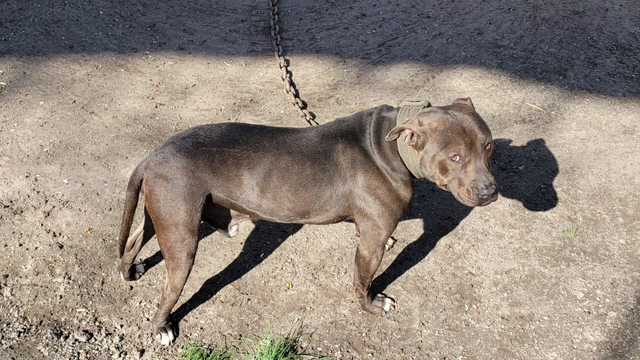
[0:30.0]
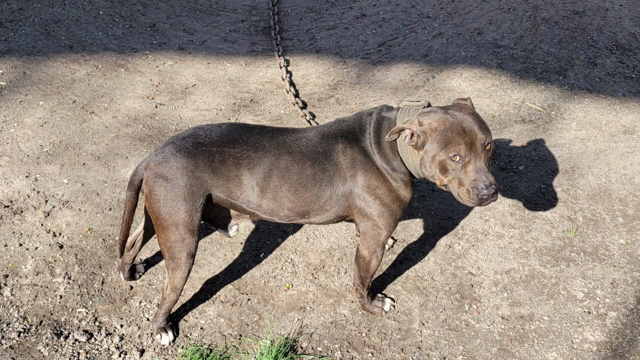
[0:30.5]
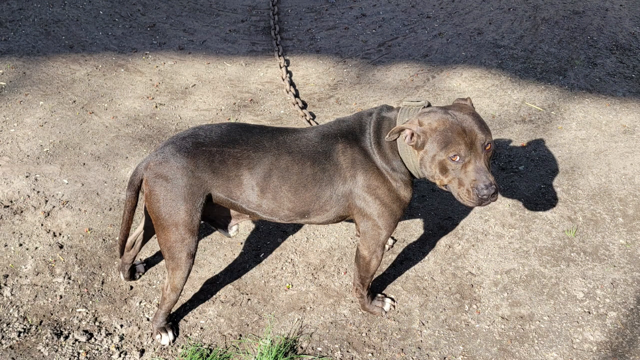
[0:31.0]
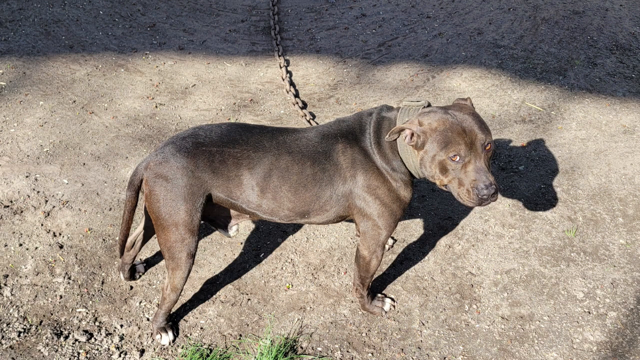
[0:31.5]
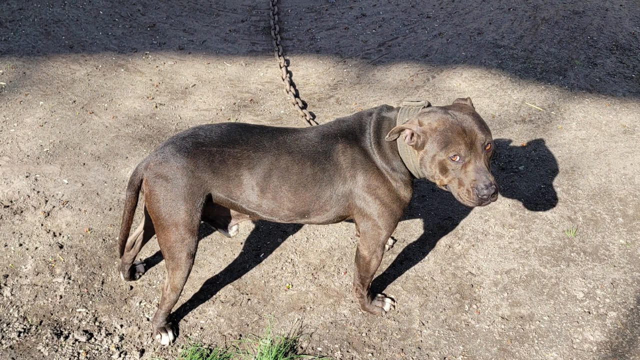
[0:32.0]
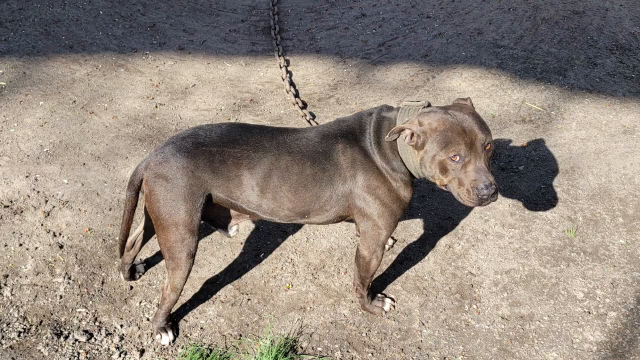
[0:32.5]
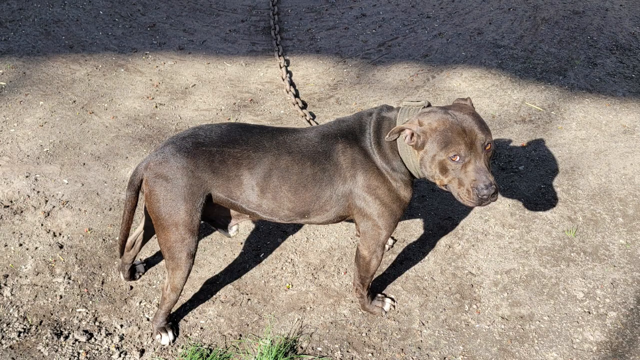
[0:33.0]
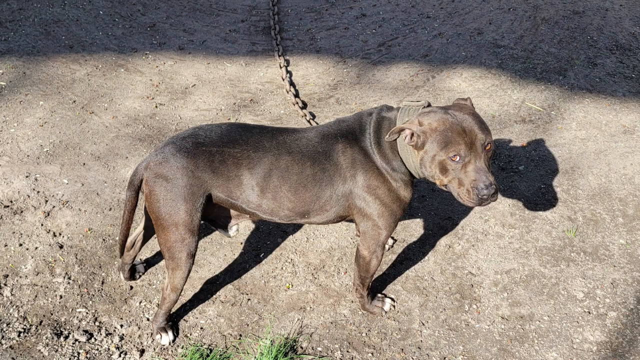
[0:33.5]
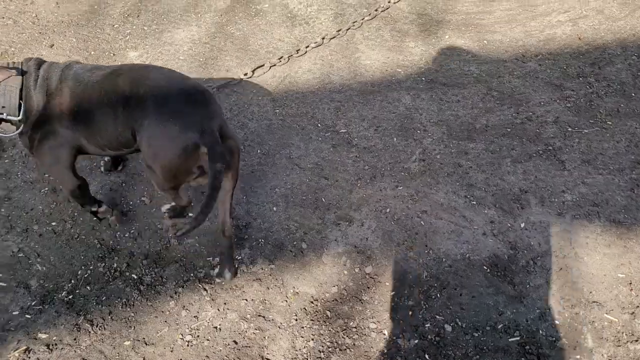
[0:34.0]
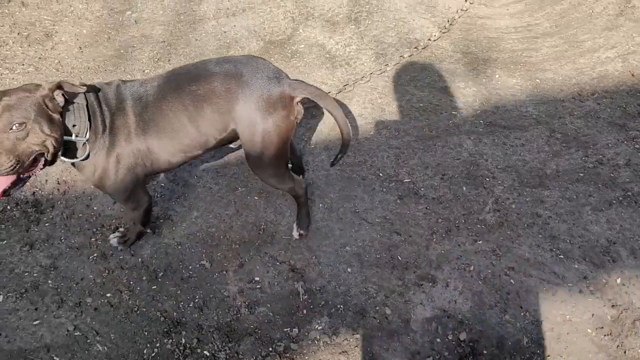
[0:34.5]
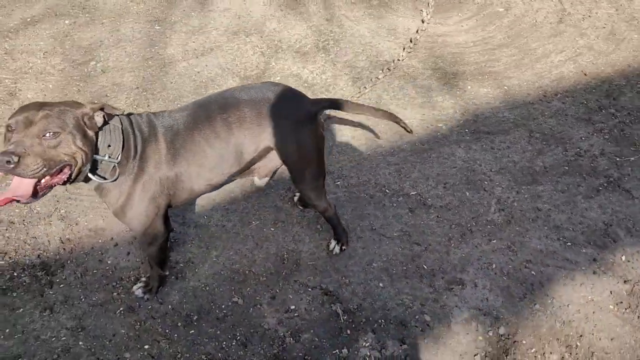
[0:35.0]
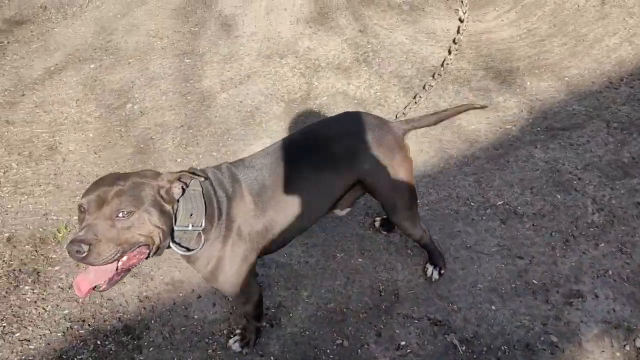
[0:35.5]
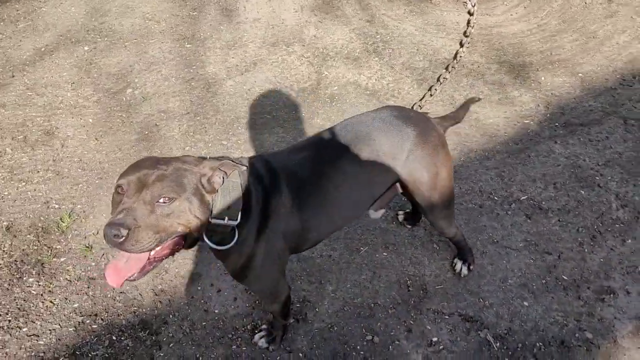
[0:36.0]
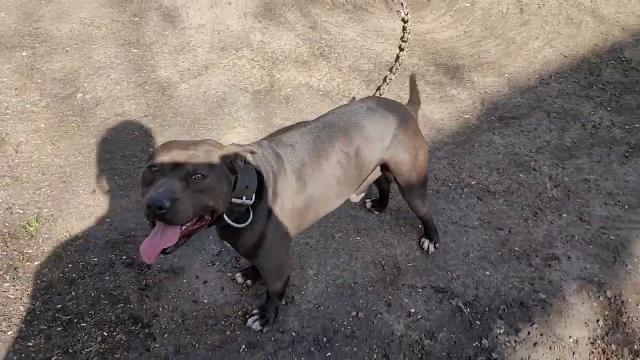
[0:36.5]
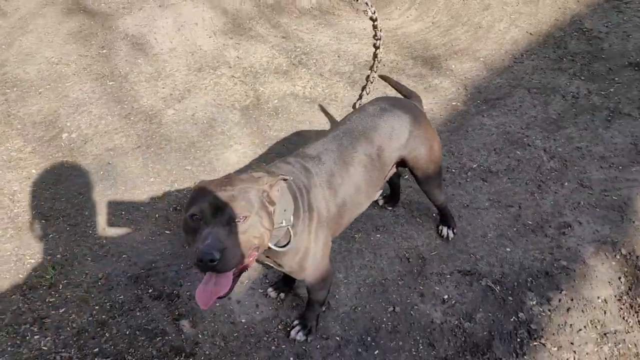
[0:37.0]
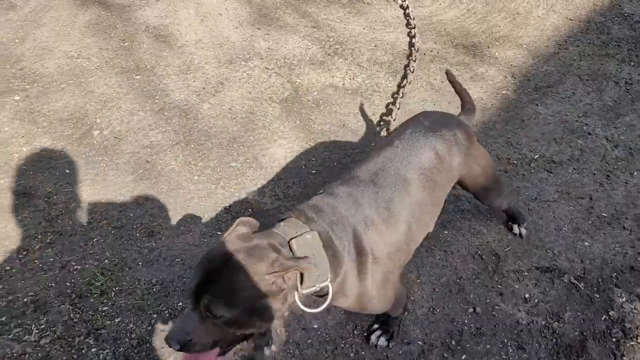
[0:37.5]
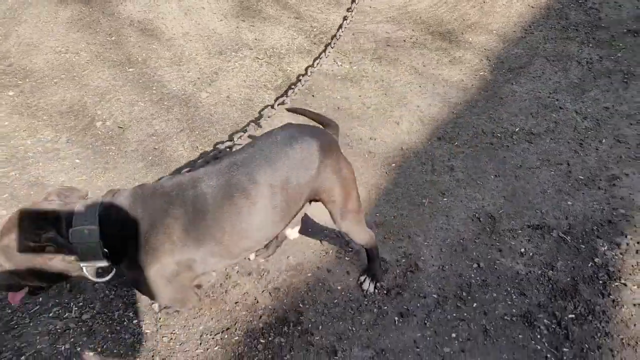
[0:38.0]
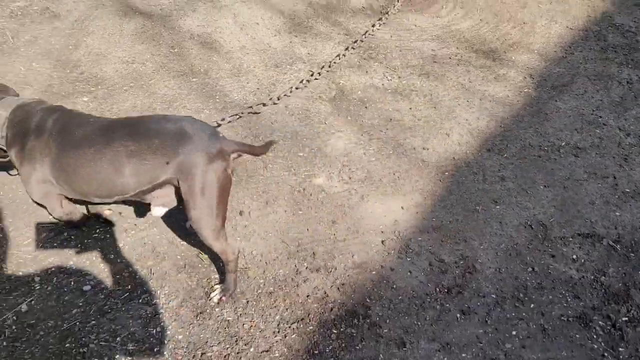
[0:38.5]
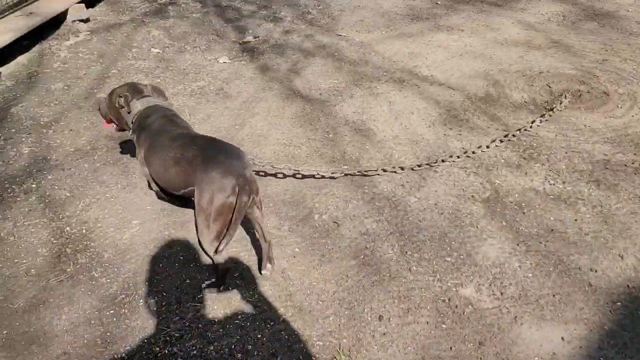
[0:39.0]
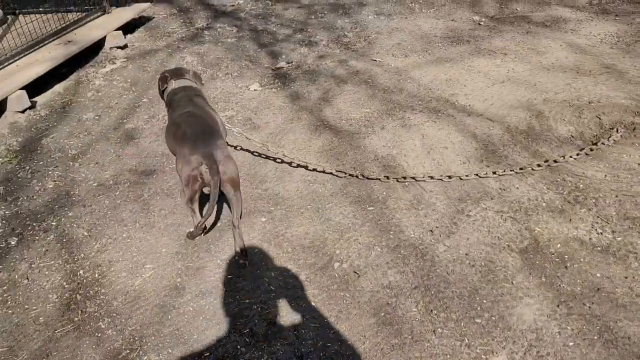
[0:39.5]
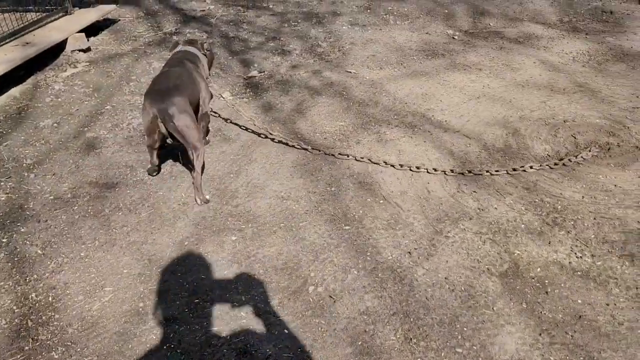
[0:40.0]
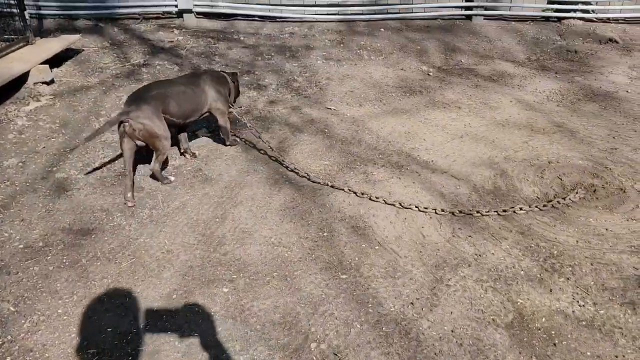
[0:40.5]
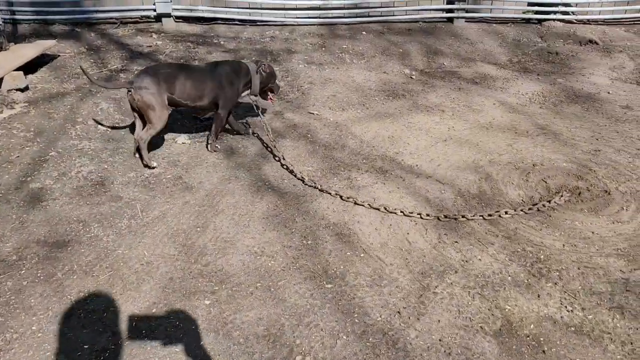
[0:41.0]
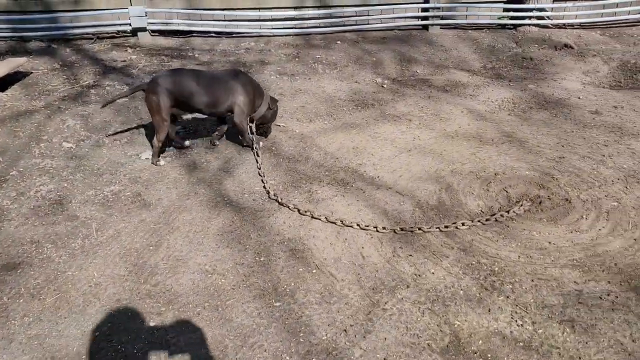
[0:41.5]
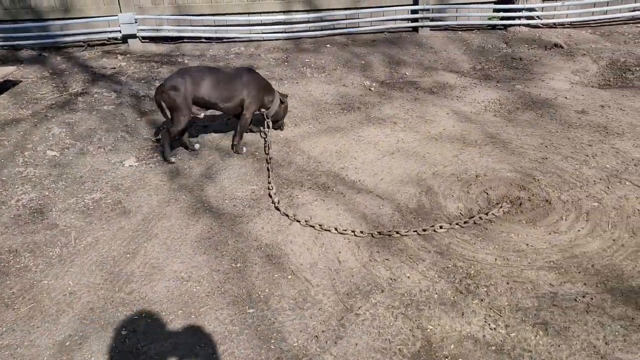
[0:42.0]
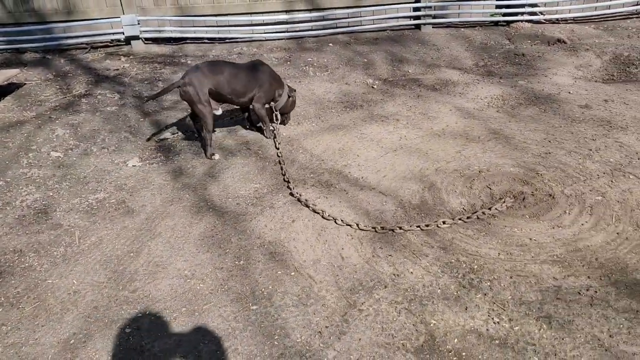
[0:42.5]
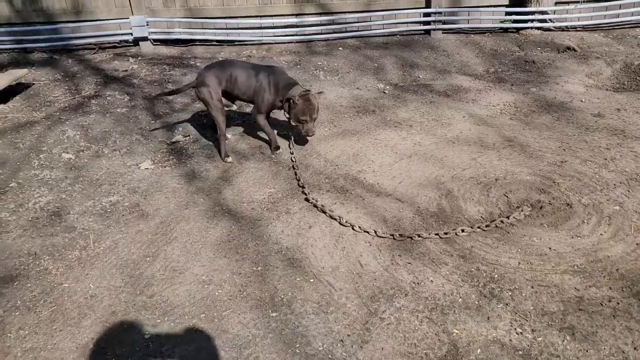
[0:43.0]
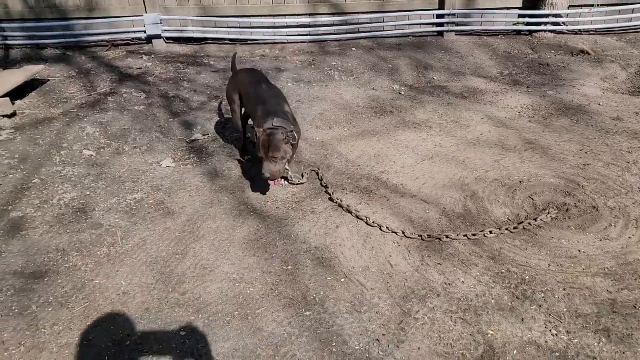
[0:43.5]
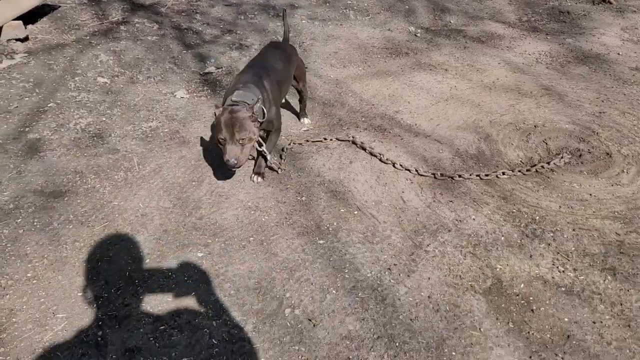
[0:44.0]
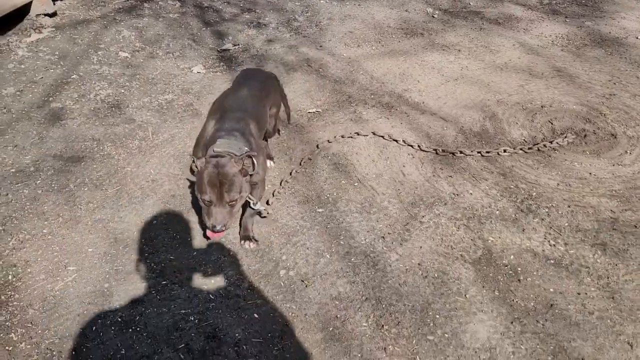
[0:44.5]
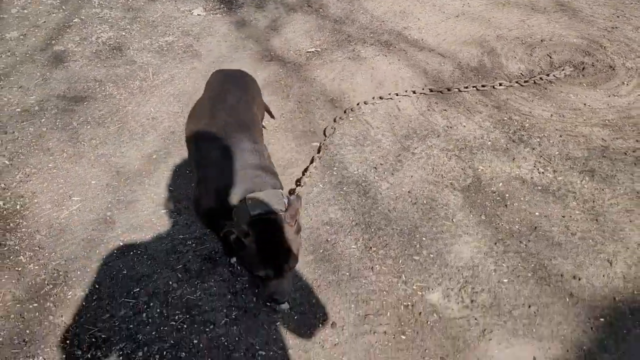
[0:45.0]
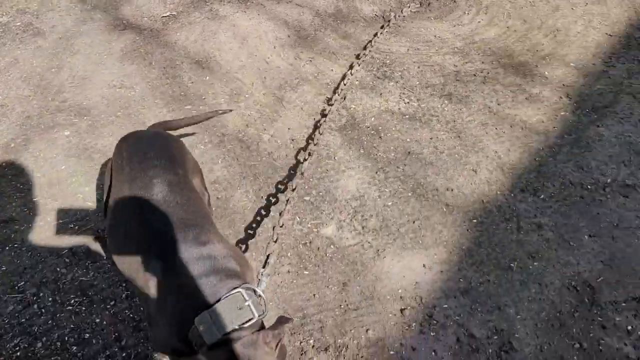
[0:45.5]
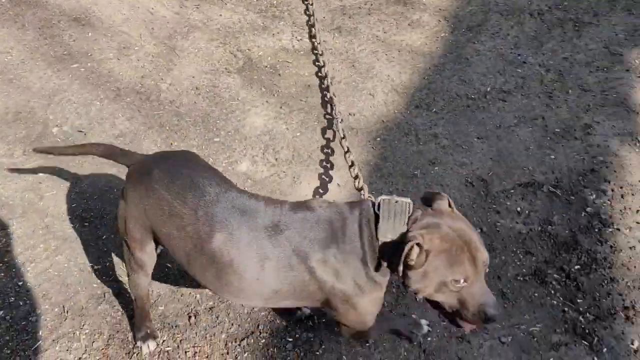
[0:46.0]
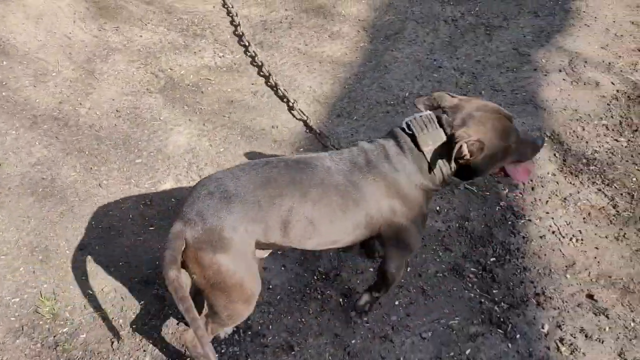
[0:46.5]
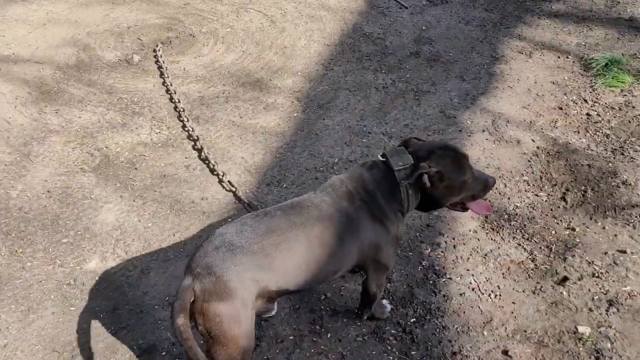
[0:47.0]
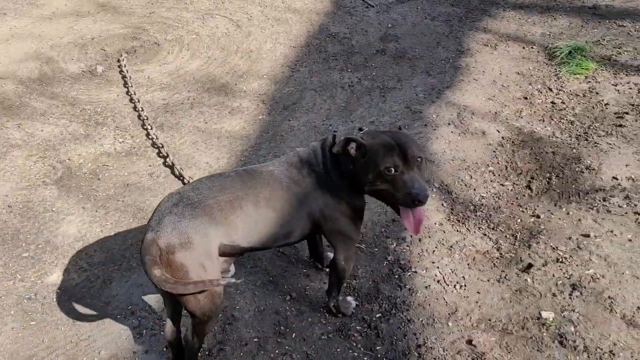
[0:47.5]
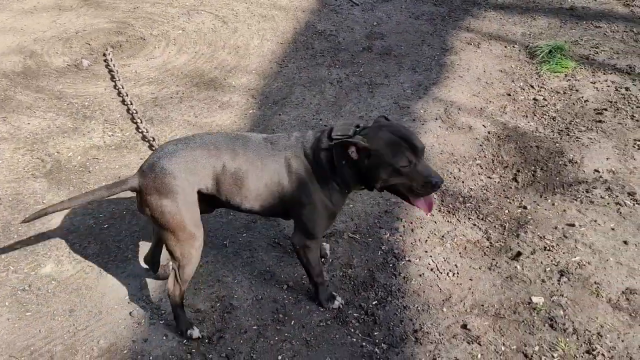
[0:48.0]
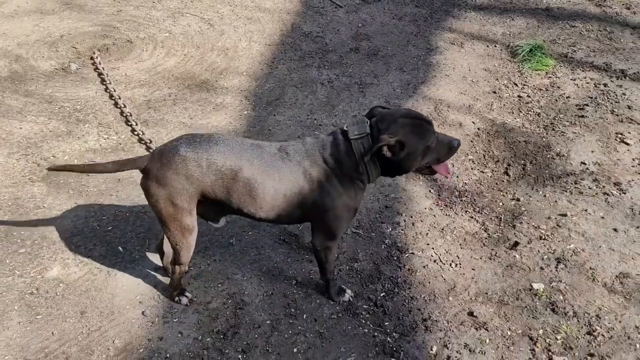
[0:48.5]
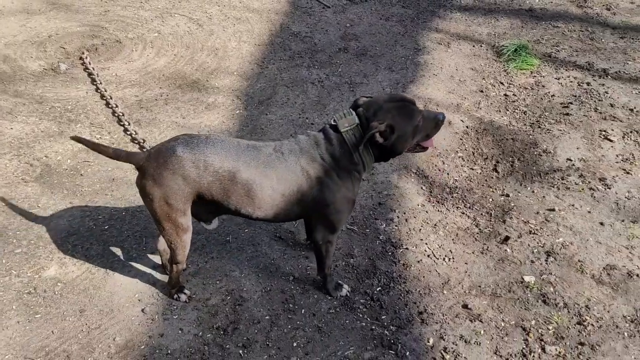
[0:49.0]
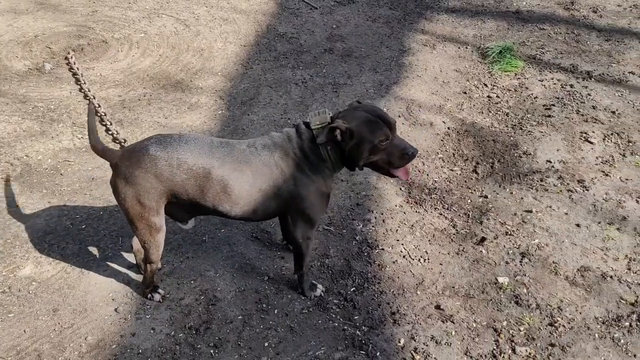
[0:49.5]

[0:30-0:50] A different dog, a black one, has its tongue out and is wagging its tail. It moves around in an inviting way, apparently greeting someone familiar. The dog has a belt on its neck to which an iron is strapped so that it cannot go too far. With its tongue out, it is playing and appears happy with the people around.